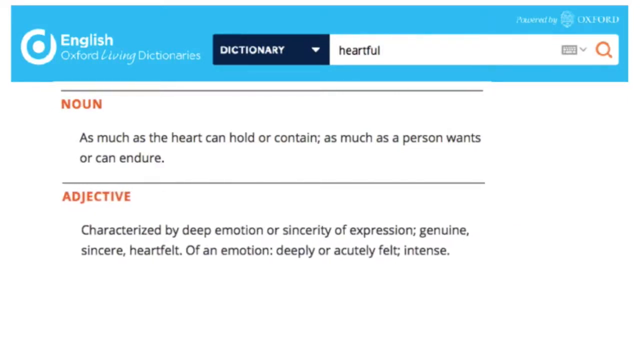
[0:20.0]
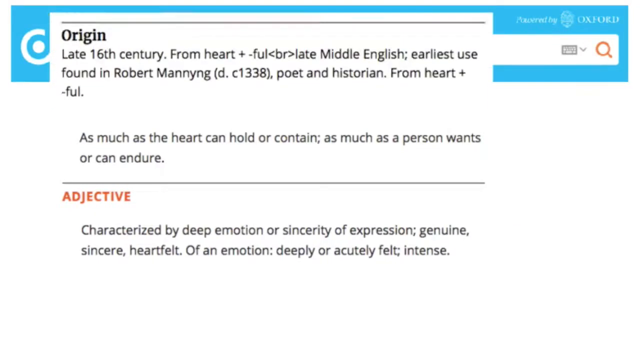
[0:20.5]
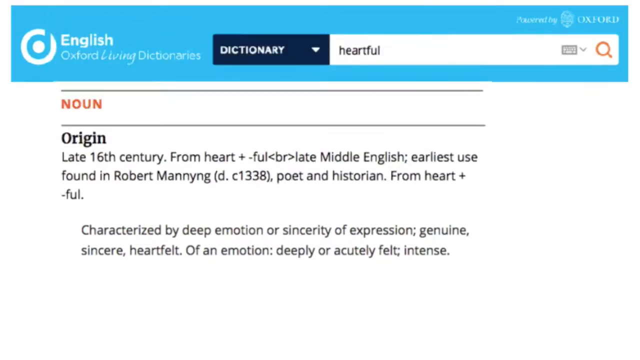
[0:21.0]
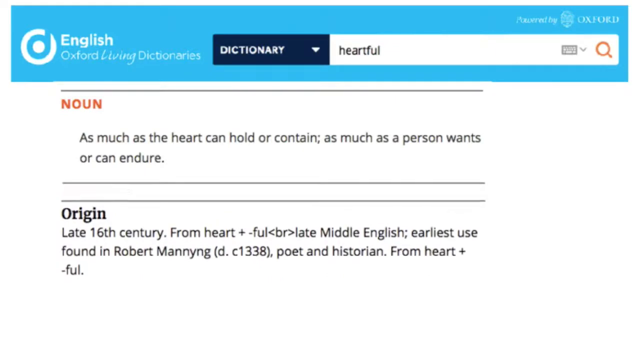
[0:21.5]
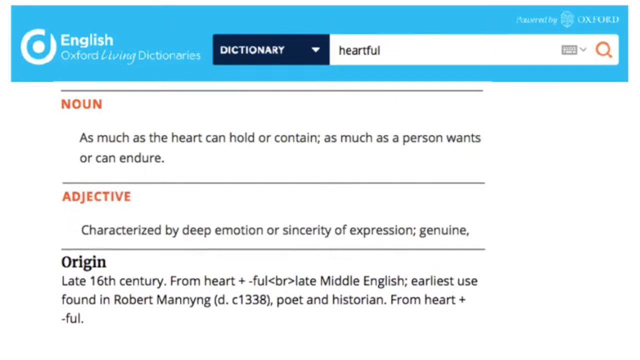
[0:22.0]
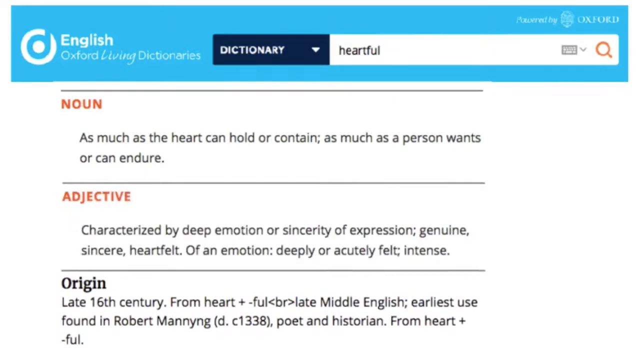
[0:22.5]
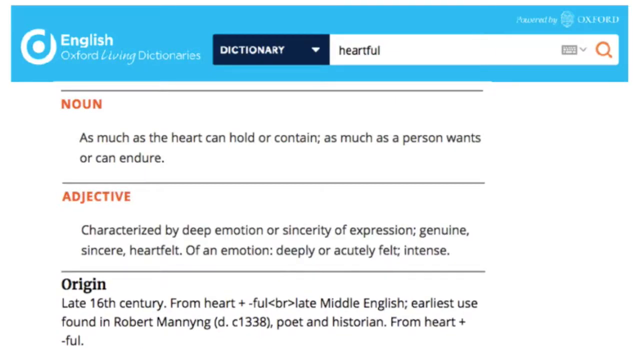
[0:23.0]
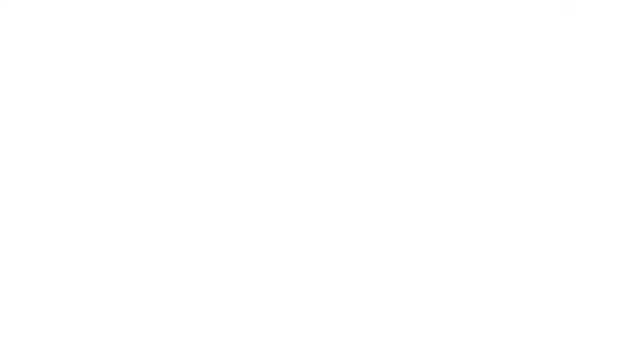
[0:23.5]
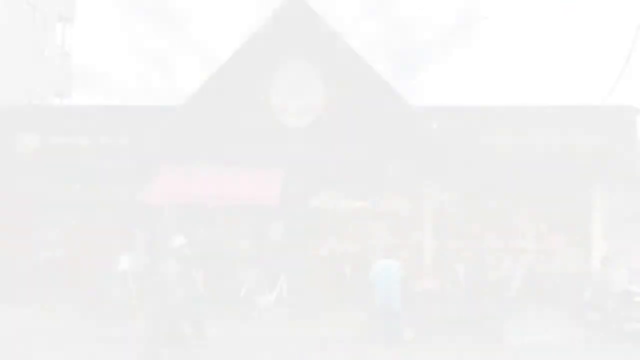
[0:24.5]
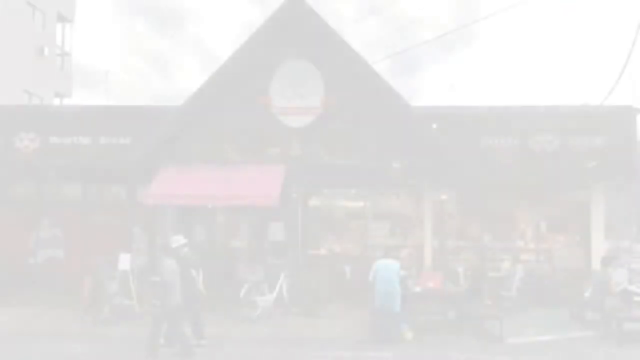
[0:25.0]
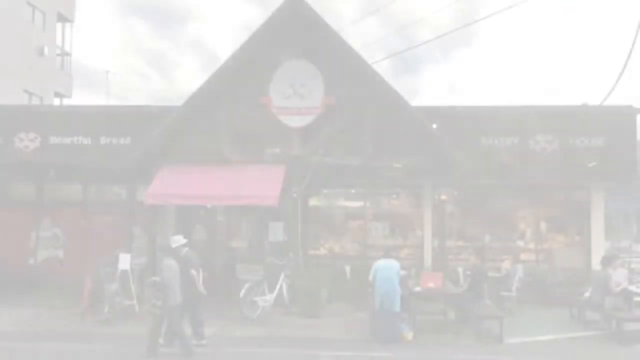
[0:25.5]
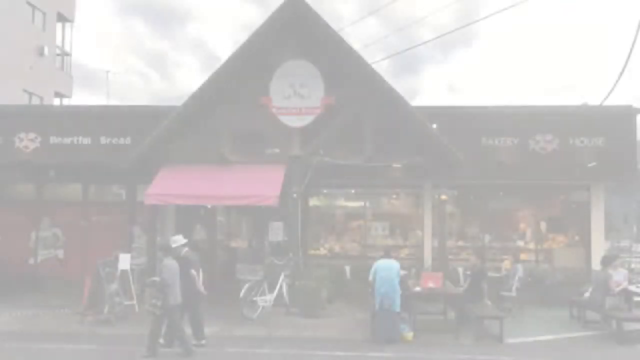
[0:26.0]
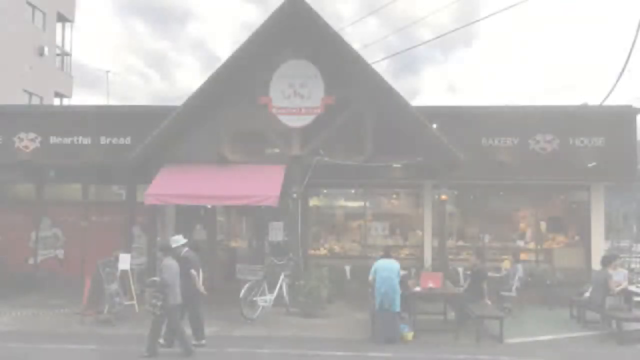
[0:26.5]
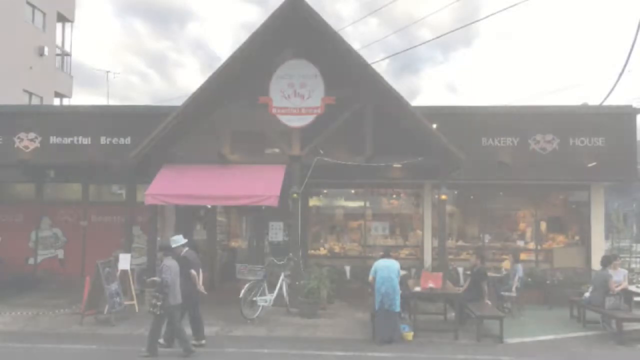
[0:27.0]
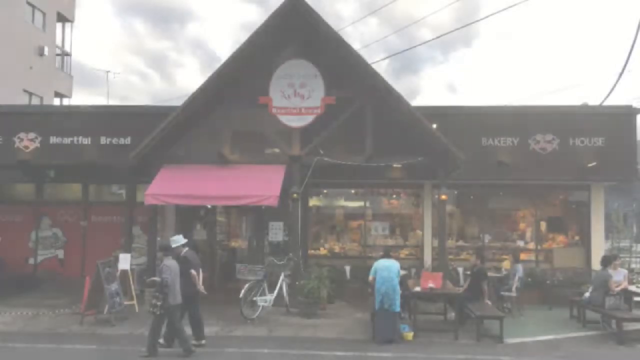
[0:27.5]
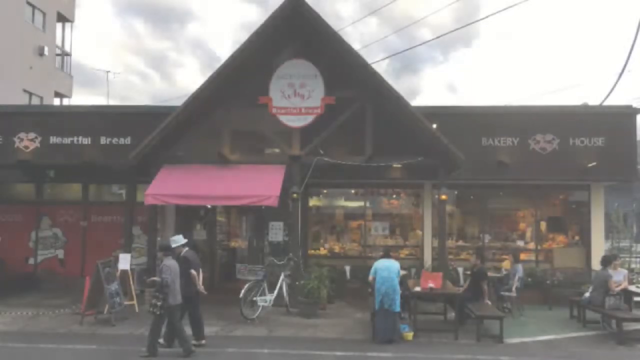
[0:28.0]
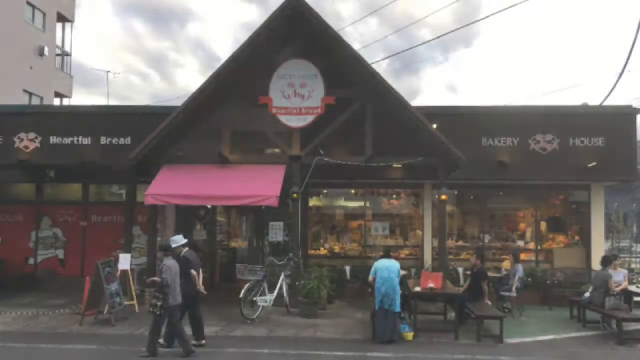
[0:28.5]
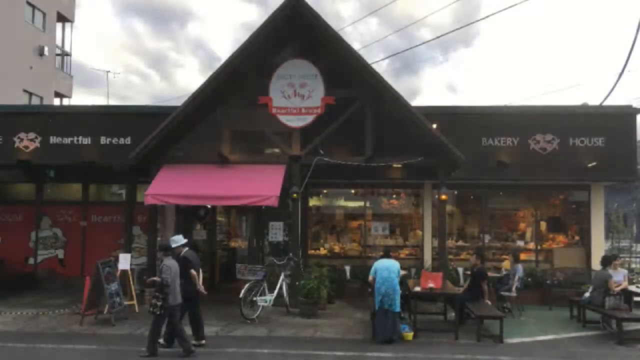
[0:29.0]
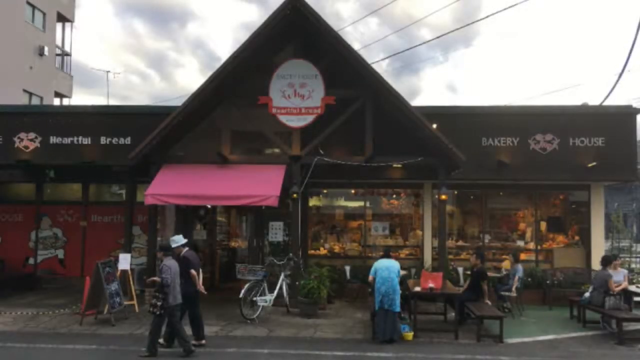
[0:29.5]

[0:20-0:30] A close-up view shows a screen without the edges of the monitor visible. Across the top, a turquoise bar runs from the left side of the screen to the right. It contains a white round circle logo with a line coming down into it that looks like it forms the letter D. Next to the logo is "English" in white bold letters, and underneath it the words "Oxford Living Dictionaries." Beside this is a navy-blue button with a white drop-down arrow and the word "dictionary" written in white. In the search bar is the word "heartful" in blue. Below it, "noun" appears in red along with the words "as much as the heart can hold or contain as much as a person wants or can endure." Beneath this is a blue line, then the word "adjective" in red, followed by the words "characterized by deep emotion or sincerity of expression. Genuine, sincere, heartfelt of an emotion deeply or acutely felt intense."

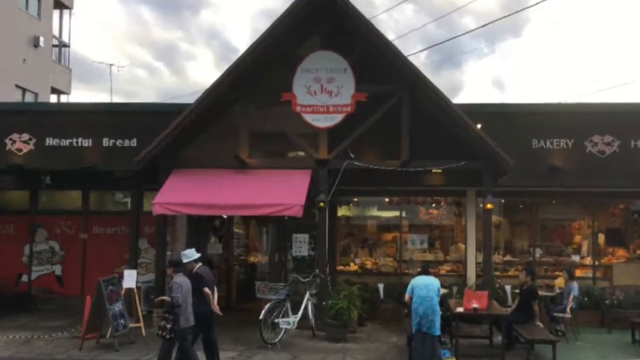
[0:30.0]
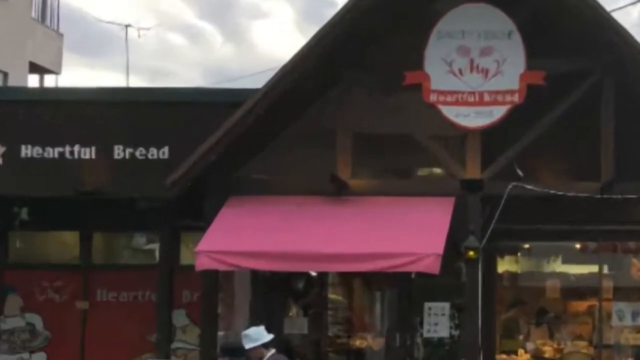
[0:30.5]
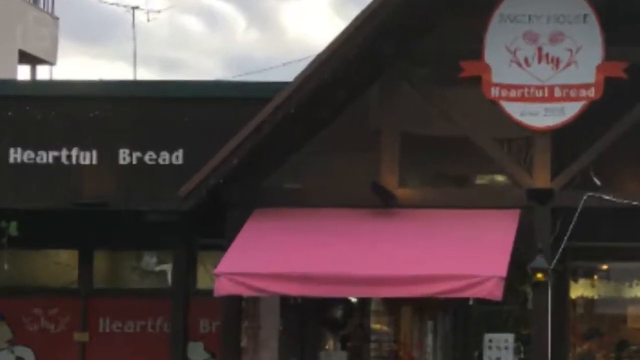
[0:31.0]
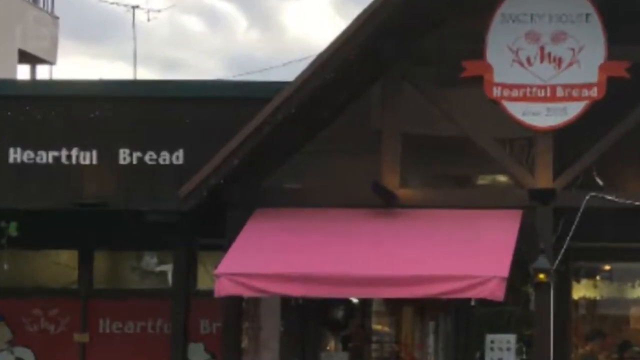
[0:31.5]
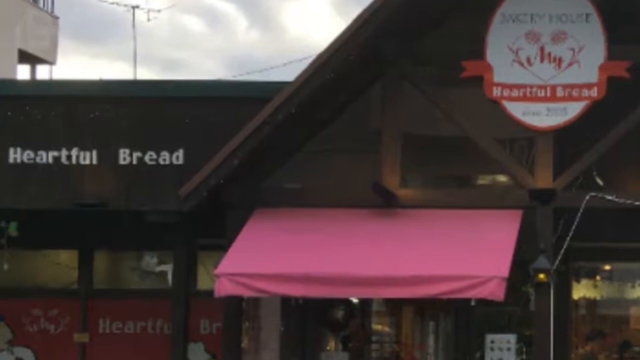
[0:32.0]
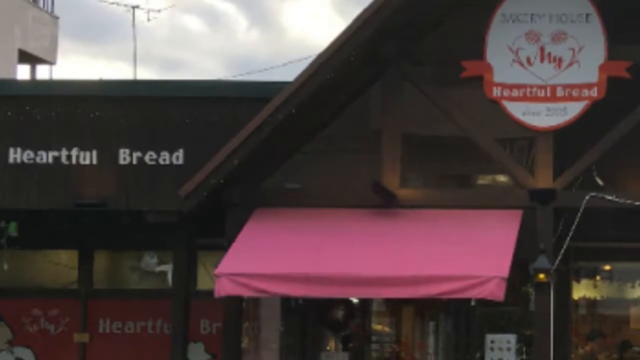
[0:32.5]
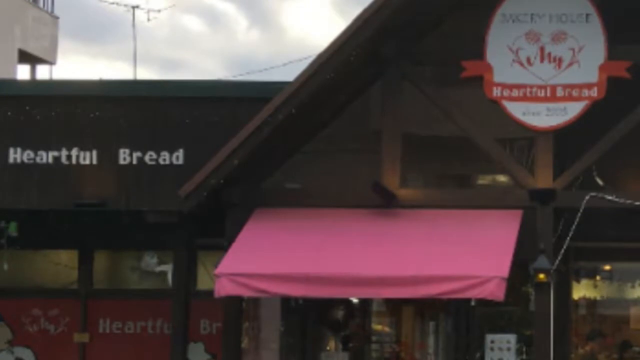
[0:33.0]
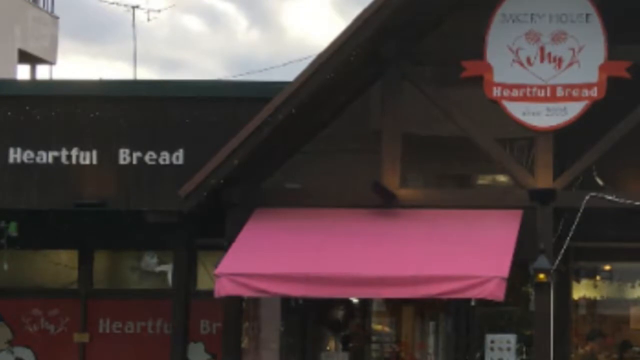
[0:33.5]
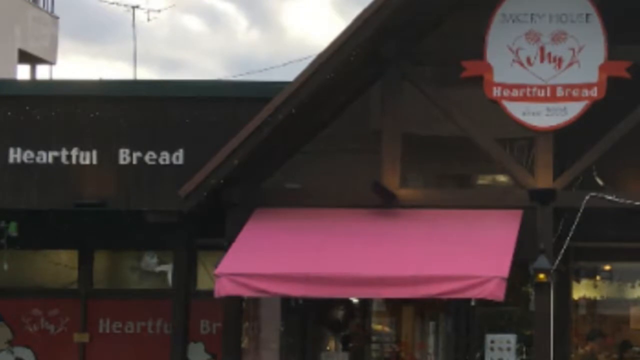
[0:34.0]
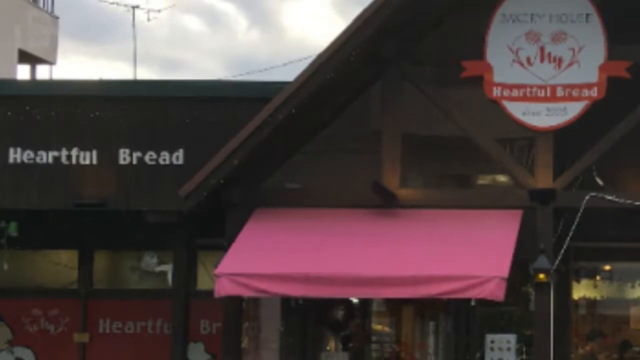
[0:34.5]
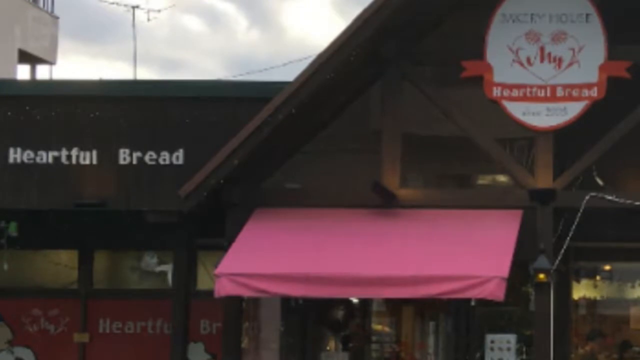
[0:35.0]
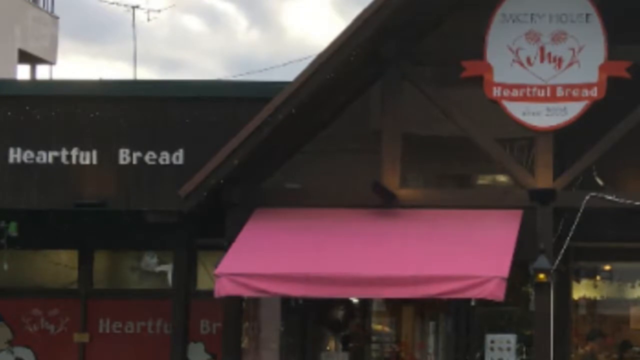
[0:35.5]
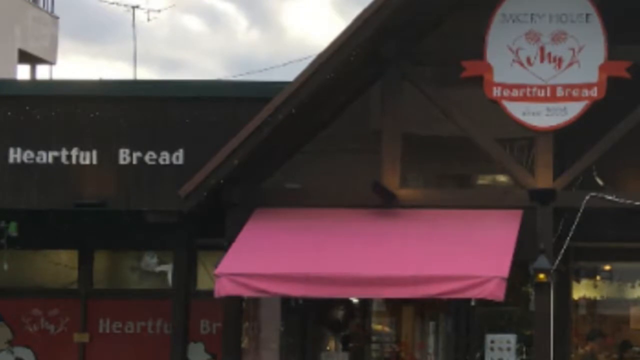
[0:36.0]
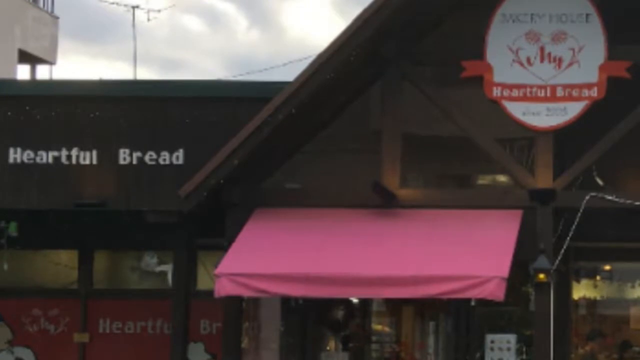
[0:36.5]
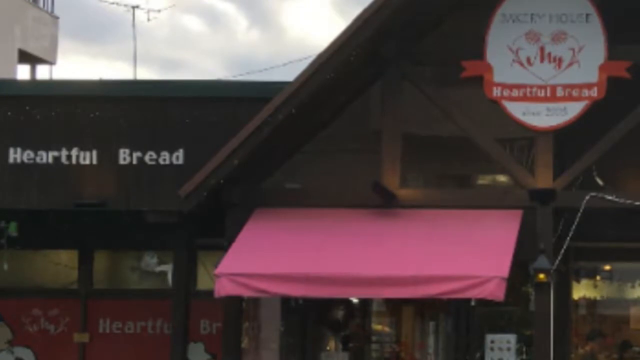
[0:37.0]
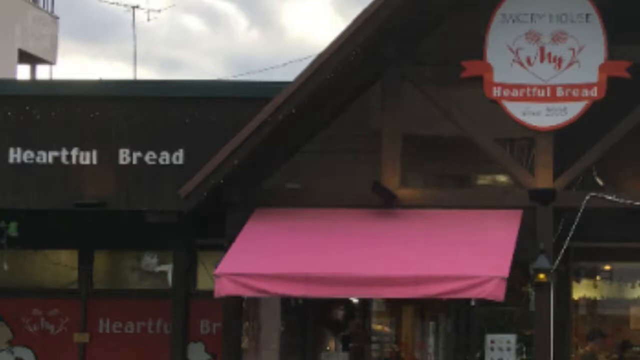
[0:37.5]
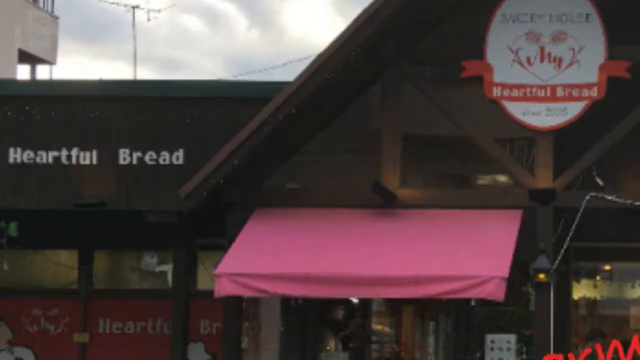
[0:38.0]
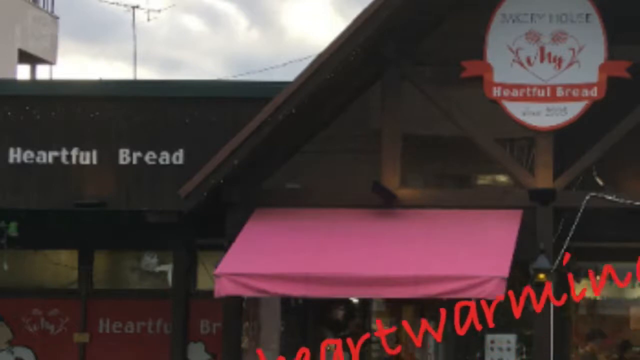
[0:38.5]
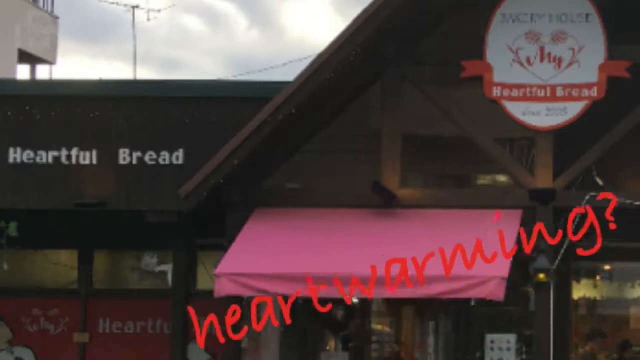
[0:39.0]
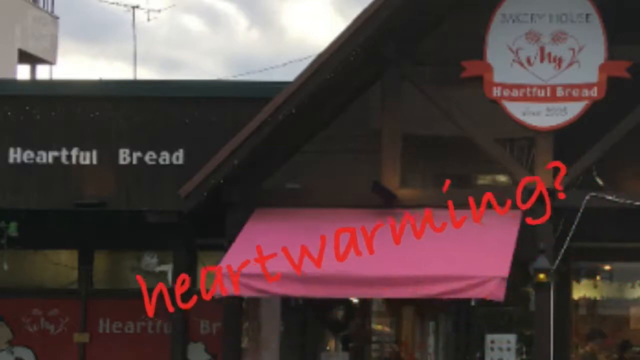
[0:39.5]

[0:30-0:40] The background is completely stark white and the screen shows nothing else: no words, people, places, things or numbers. The image stays static on the white screen. Then the screen shows the gradient area, where the white changes to gray and then to black.